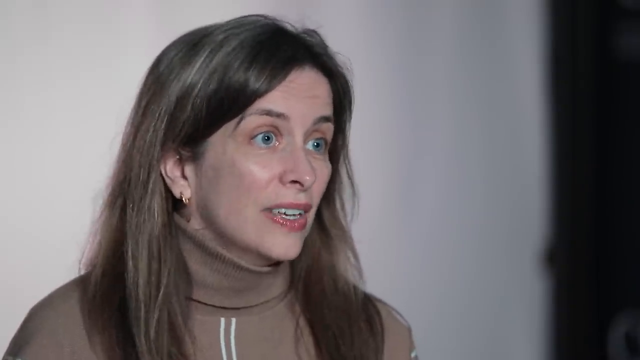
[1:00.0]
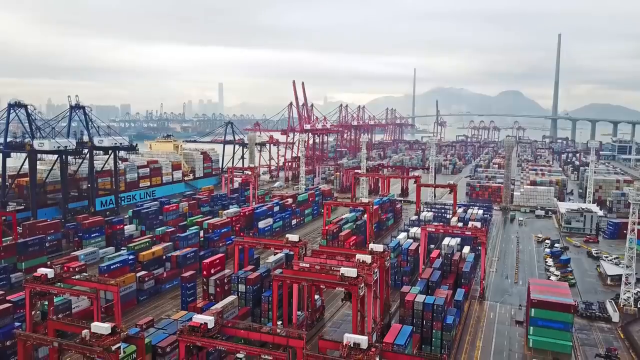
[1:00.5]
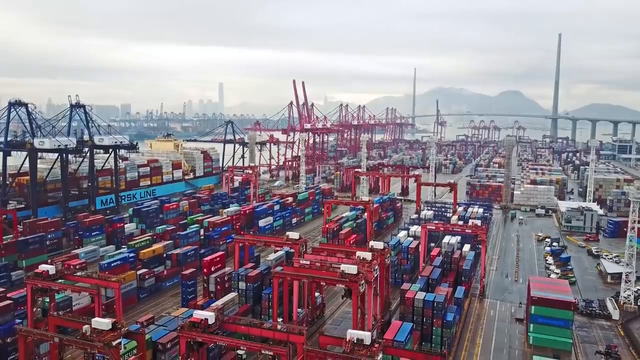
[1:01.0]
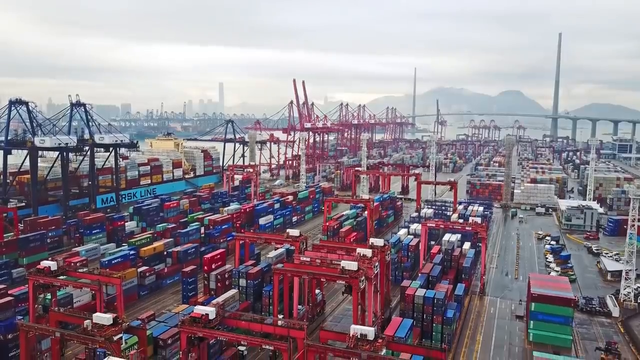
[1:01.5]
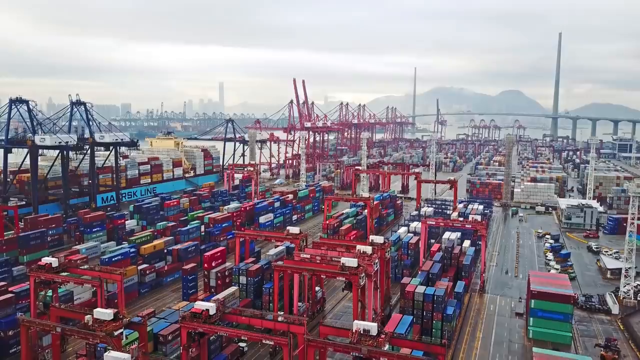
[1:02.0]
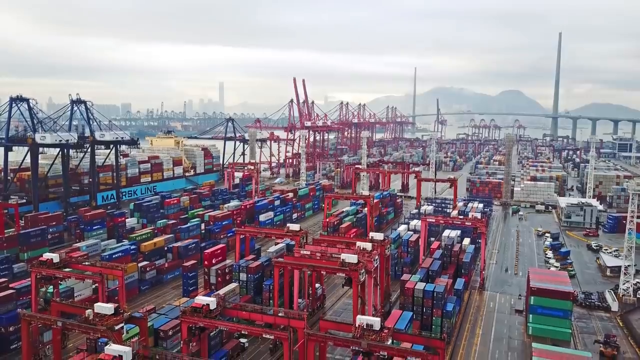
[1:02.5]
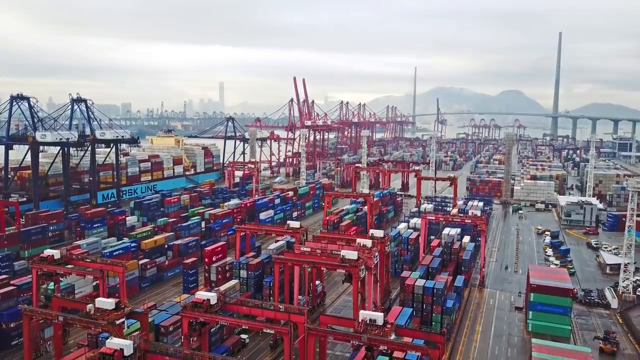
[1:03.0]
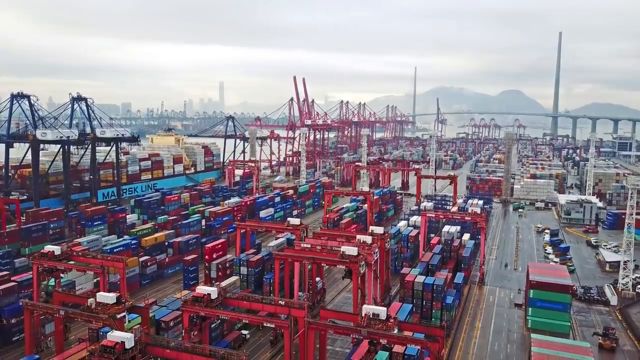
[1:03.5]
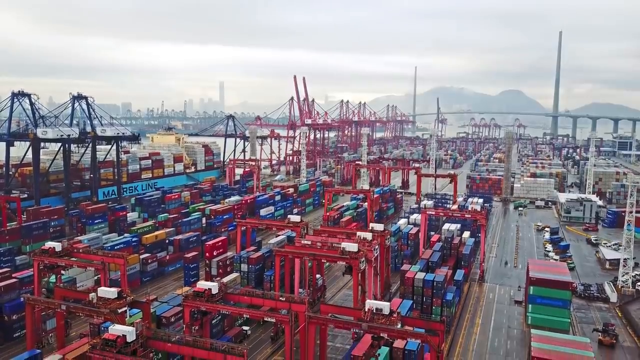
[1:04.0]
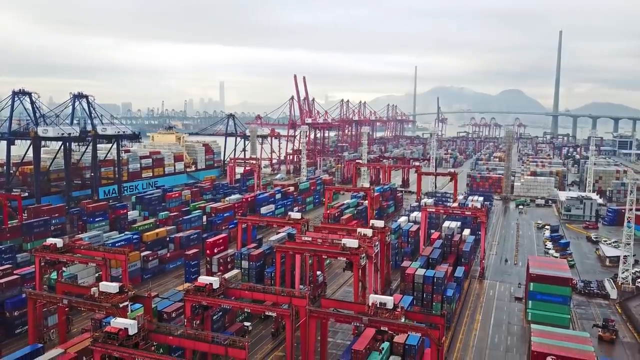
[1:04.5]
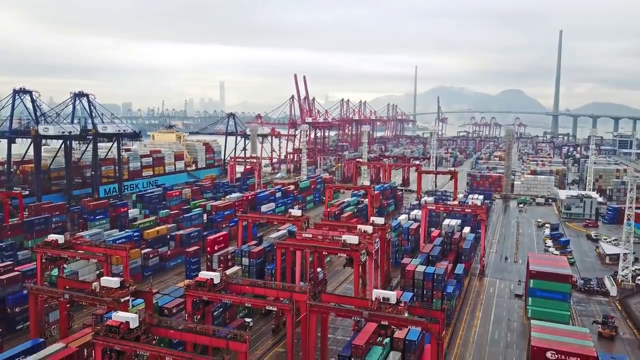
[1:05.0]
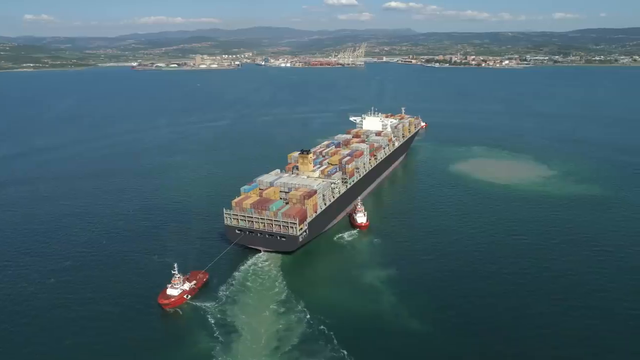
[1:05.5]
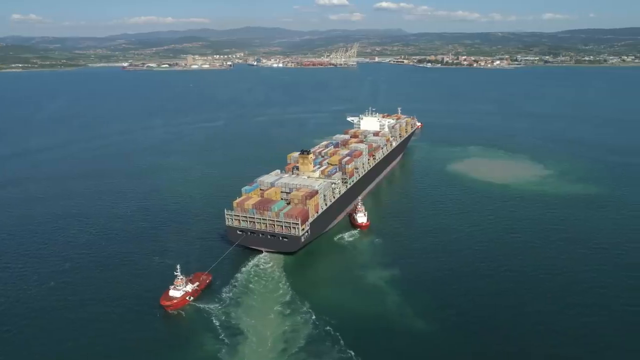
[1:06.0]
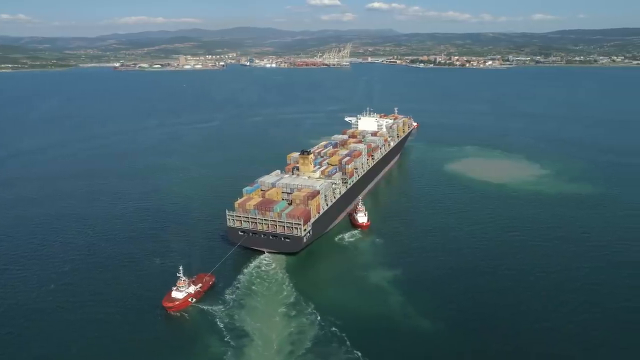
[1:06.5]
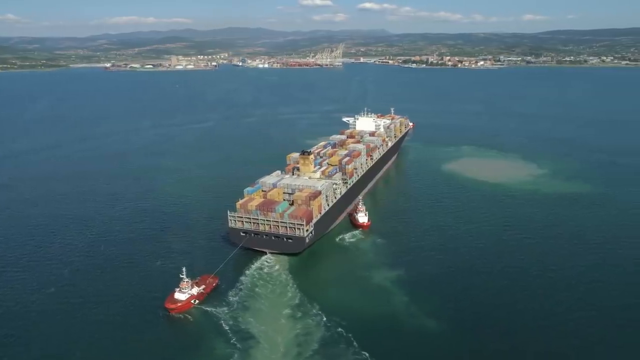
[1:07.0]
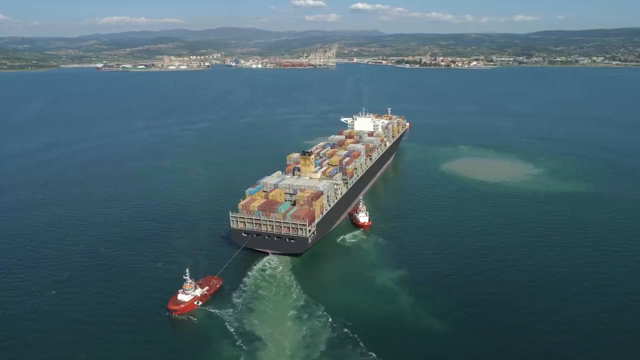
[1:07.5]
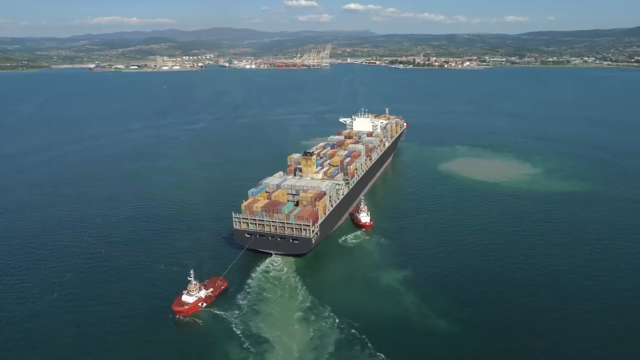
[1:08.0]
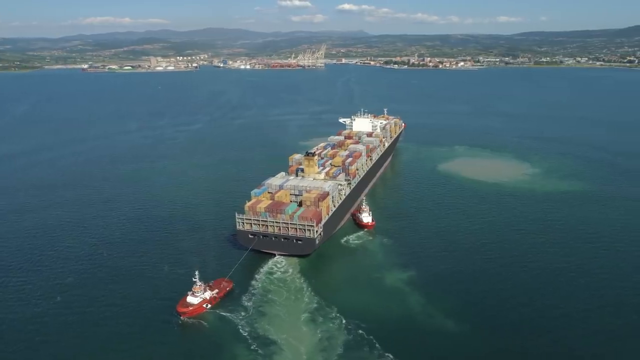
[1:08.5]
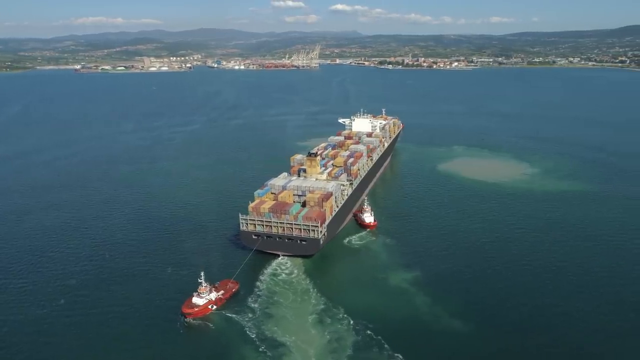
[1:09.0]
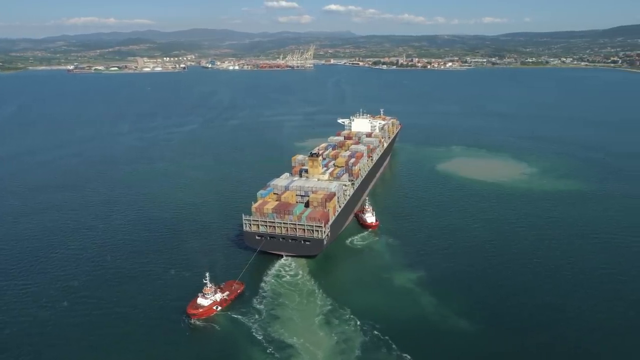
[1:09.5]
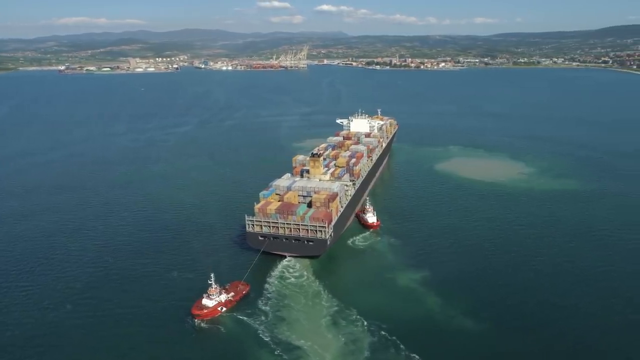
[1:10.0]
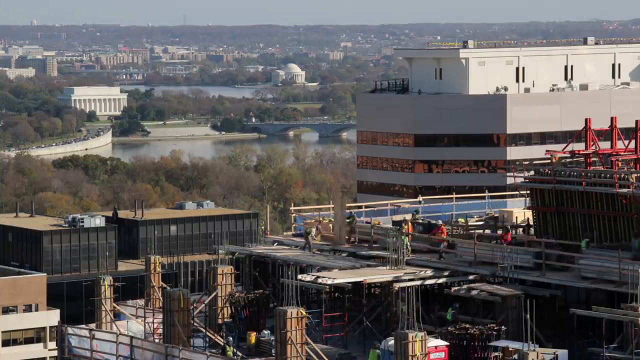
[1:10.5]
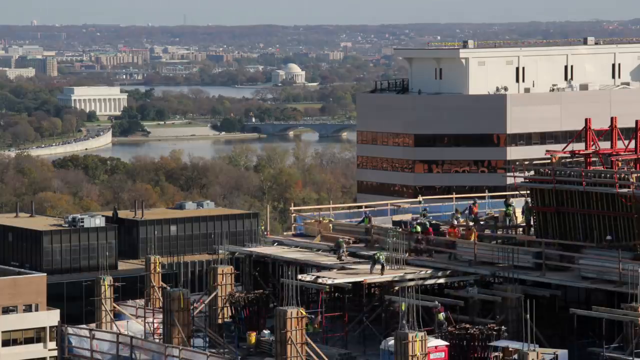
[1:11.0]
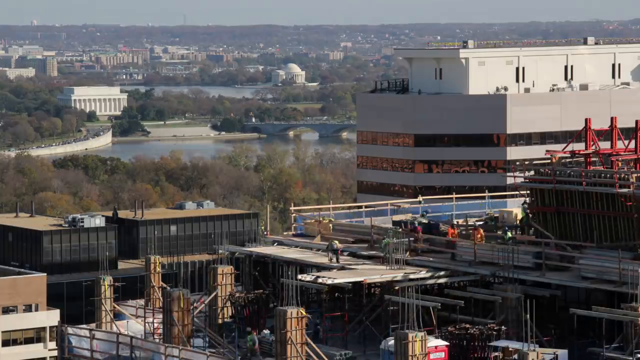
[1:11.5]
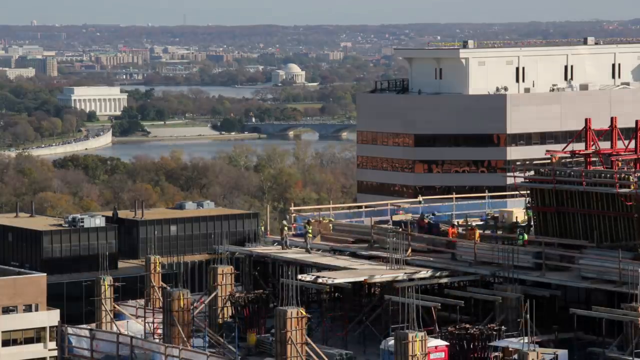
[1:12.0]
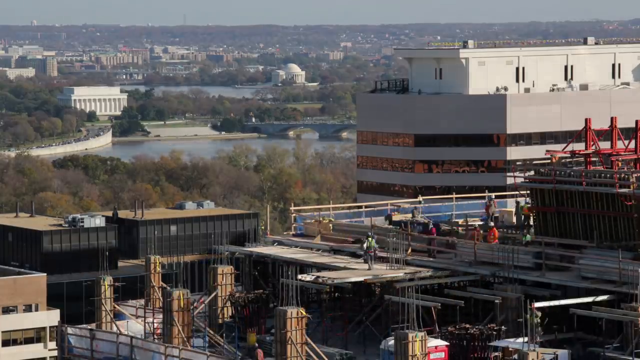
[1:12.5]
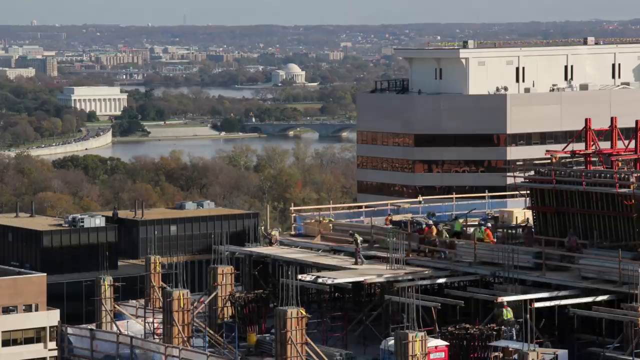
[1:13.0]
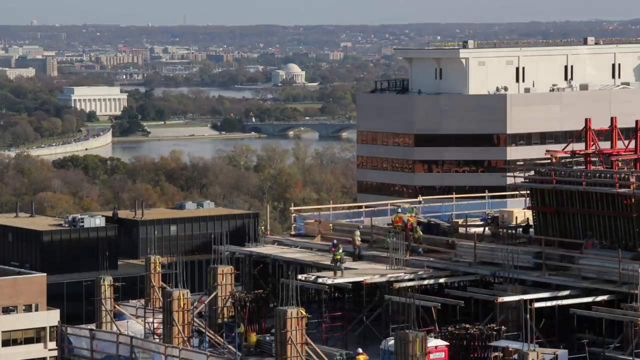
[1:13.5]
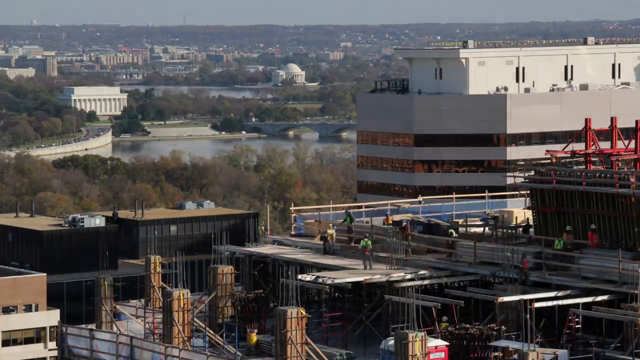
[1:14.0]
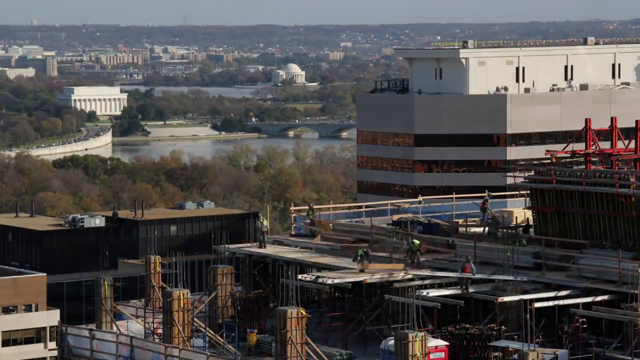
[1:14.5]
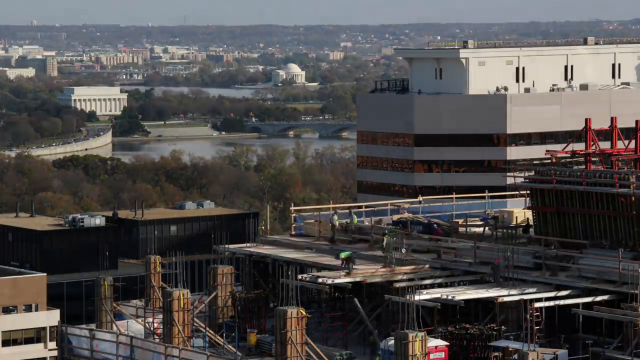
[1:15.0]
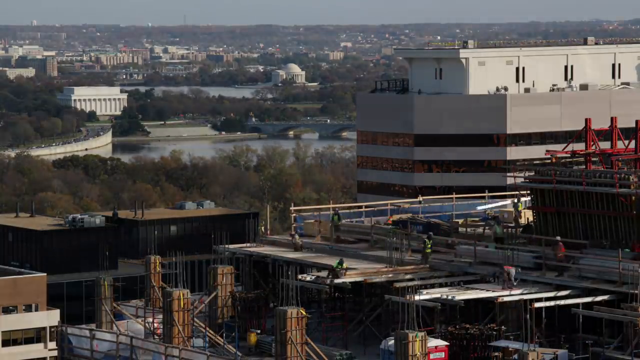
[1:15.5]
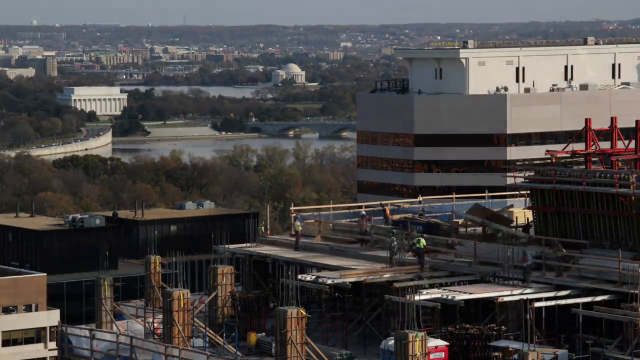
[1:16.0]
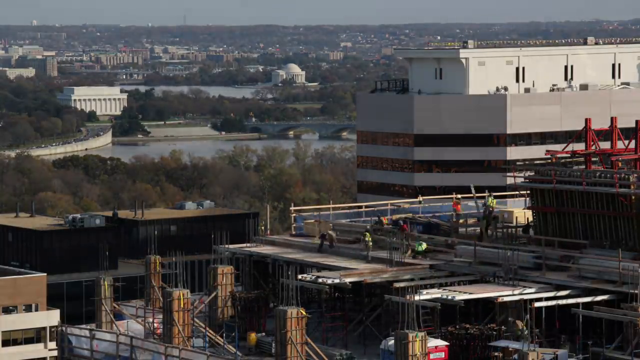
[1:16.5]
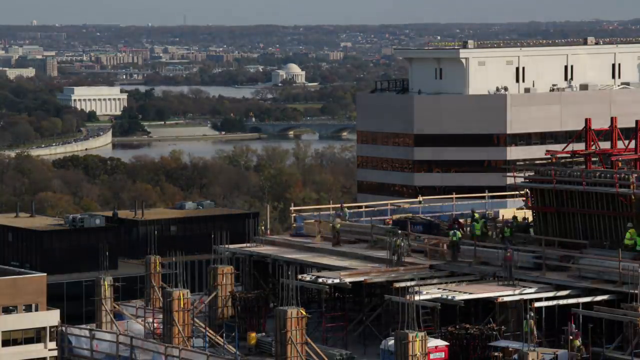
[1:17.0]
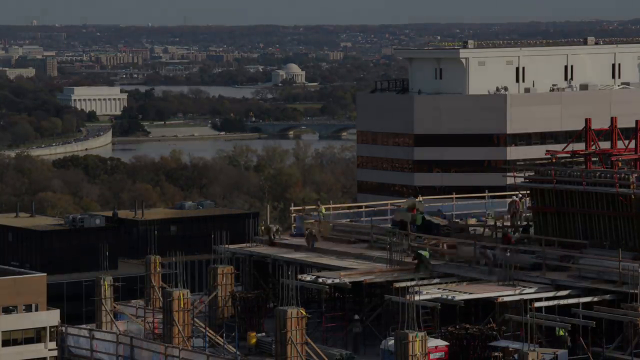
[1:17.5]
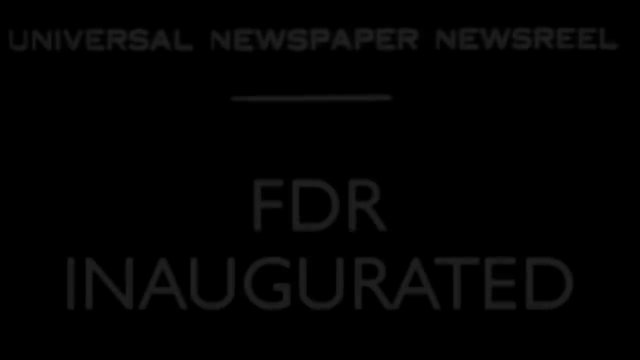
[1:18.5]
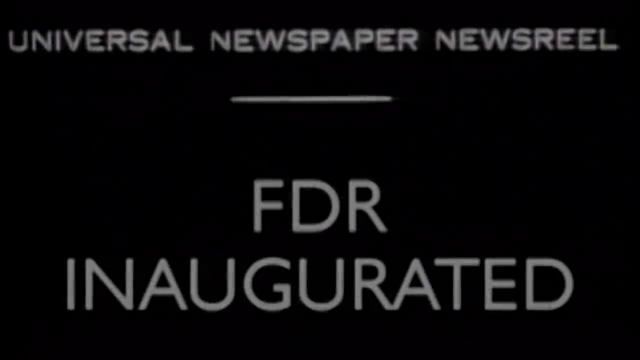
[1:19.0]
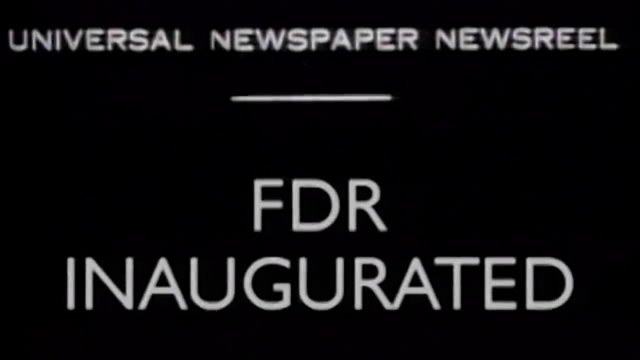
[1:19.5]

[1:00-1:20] A white woman with brown hair and red lipstick wears a brown turtleneck top with white lines running down it. Behind her is a white background, with a faded black background on the right side. The next scene shows a loading dockyard with red cranes, a gray sky and mountains in the distance. The containers are various colors: blue, orange, yellow and white. Off to the side is a boat with a blue banner, and on its side blue lettering says "Maersk Line". The cranes move around to pick up packages. Another image shows a blue and white cloudy sky, gray and green mountains in the background, a coastline and blue water. Two red tugboats with white sections on top guide a gray-outlined container ship carrying containers in colors such as brown, yellow, blue and white.